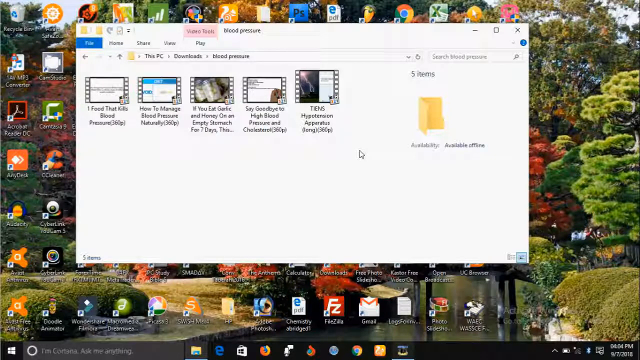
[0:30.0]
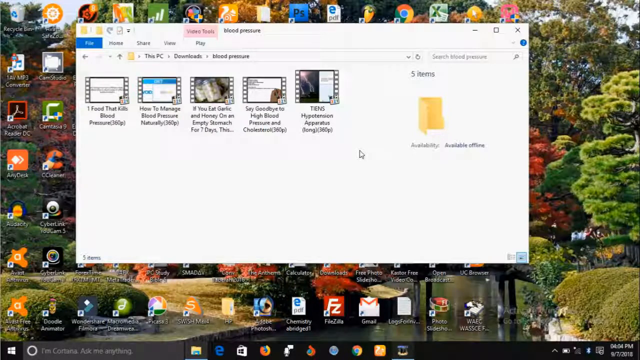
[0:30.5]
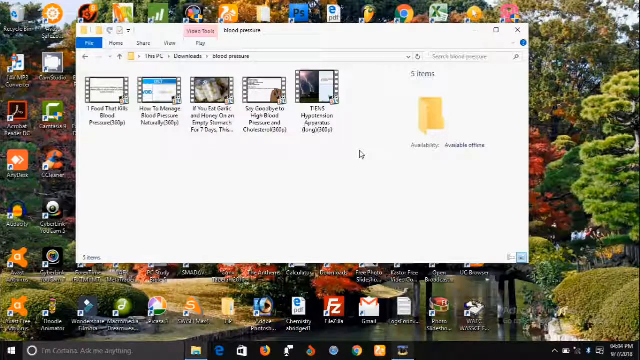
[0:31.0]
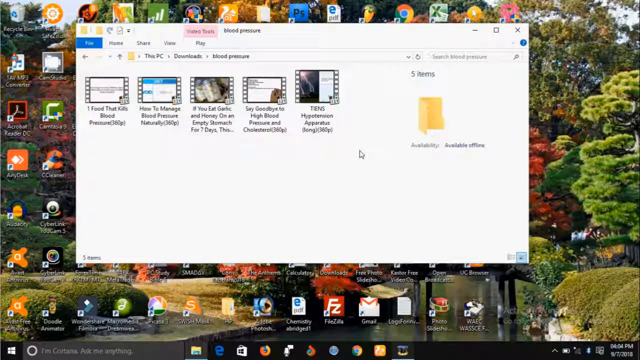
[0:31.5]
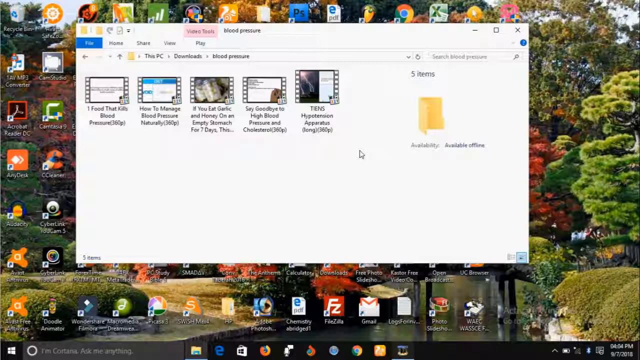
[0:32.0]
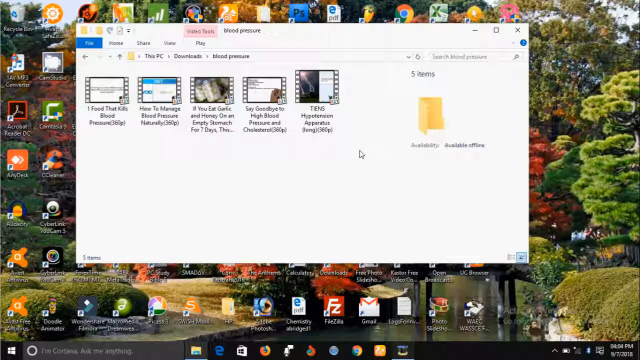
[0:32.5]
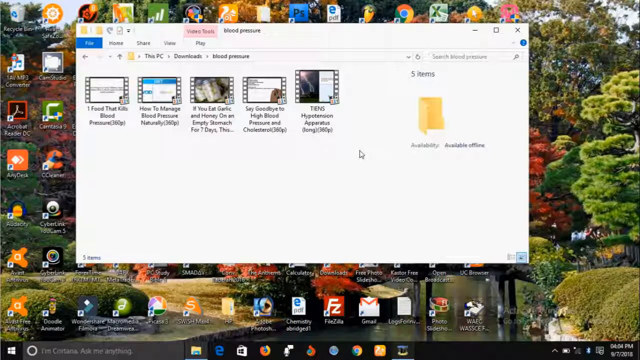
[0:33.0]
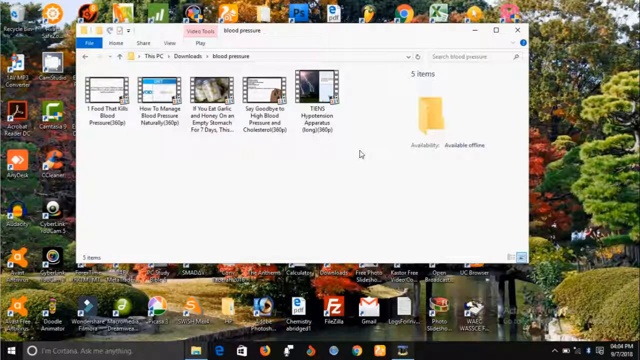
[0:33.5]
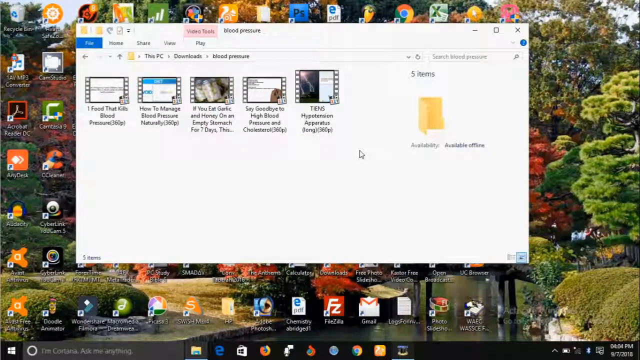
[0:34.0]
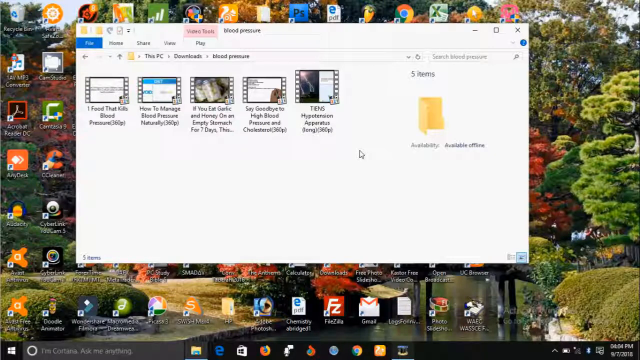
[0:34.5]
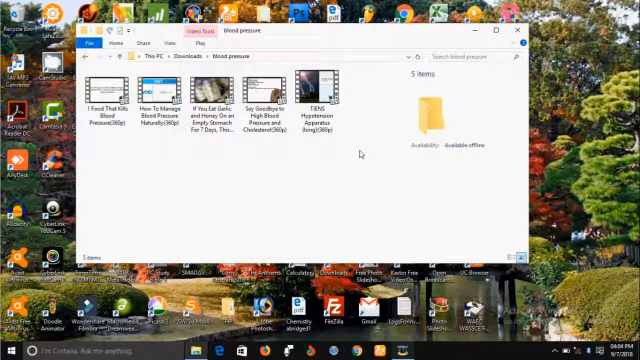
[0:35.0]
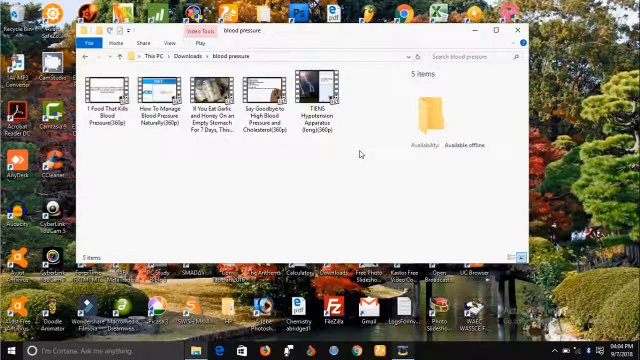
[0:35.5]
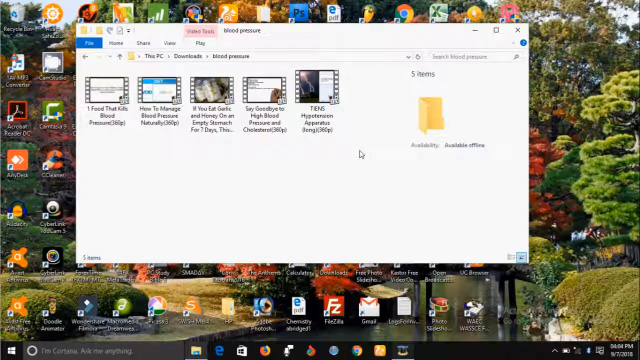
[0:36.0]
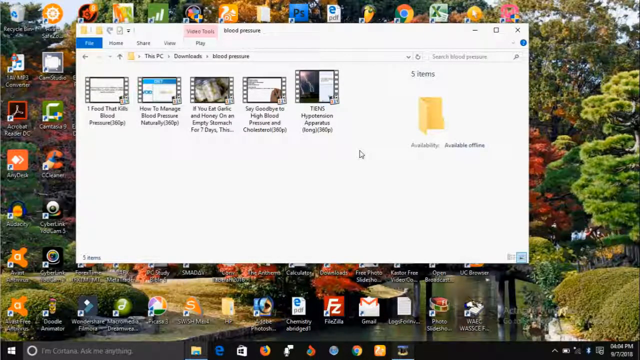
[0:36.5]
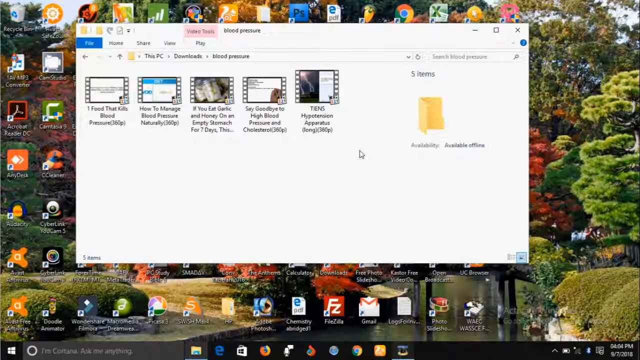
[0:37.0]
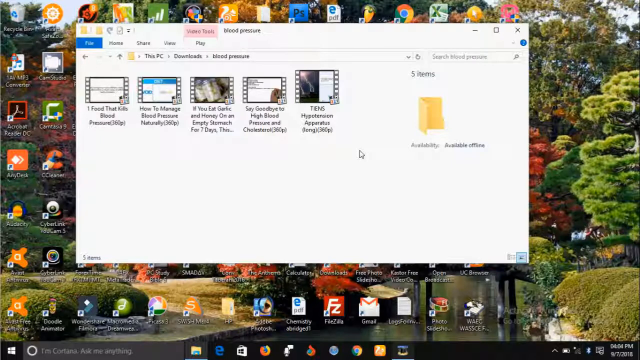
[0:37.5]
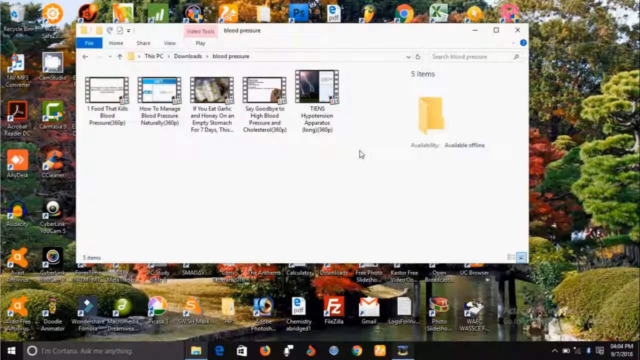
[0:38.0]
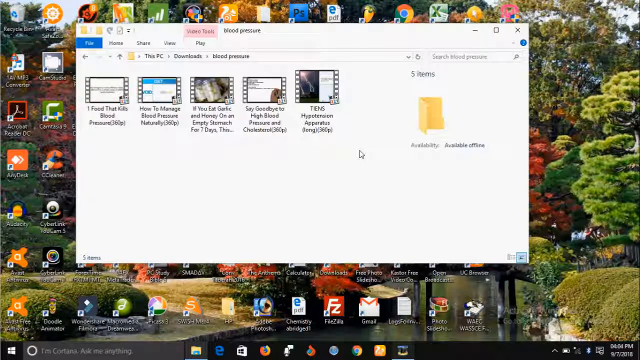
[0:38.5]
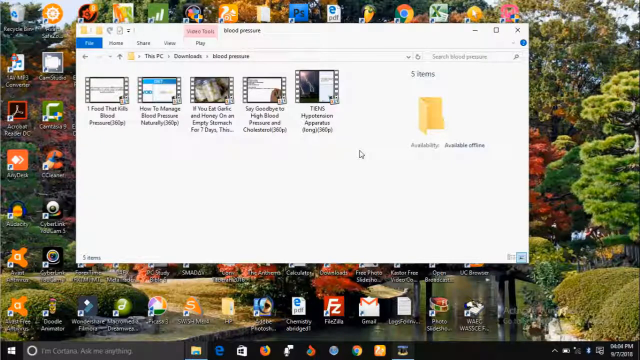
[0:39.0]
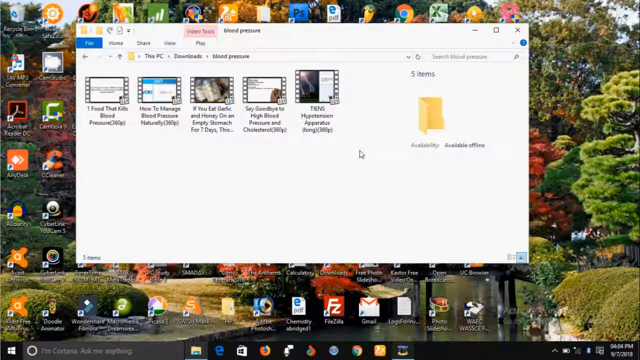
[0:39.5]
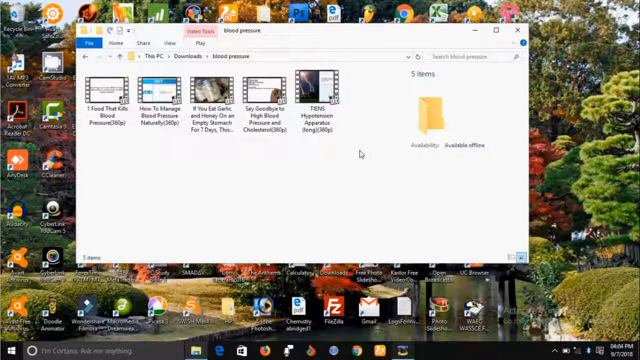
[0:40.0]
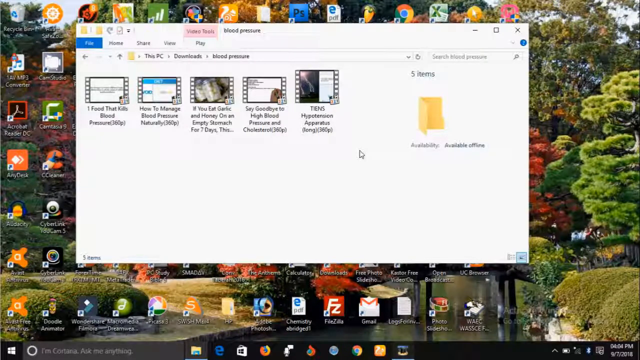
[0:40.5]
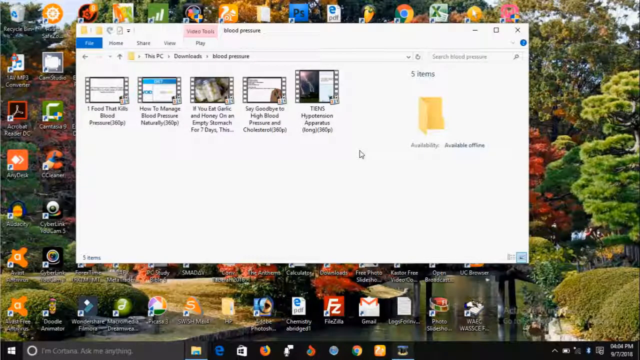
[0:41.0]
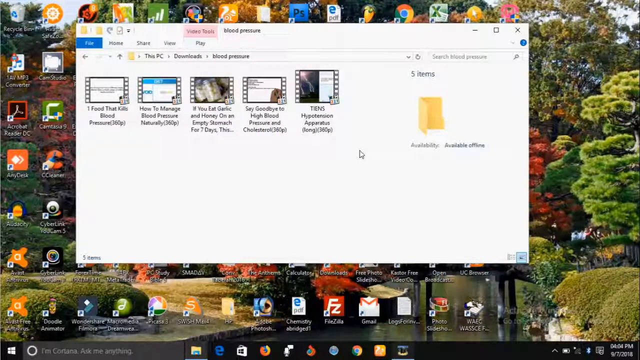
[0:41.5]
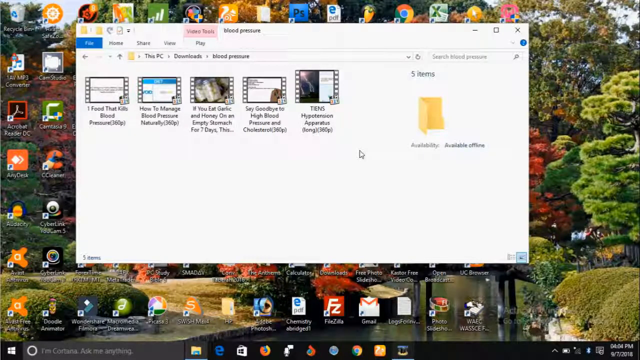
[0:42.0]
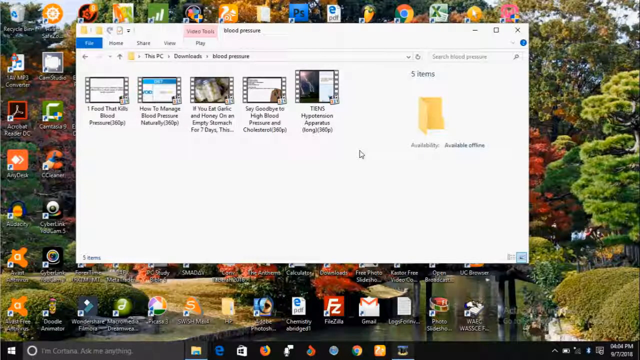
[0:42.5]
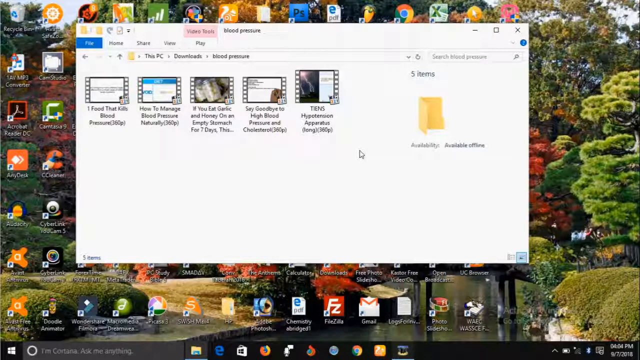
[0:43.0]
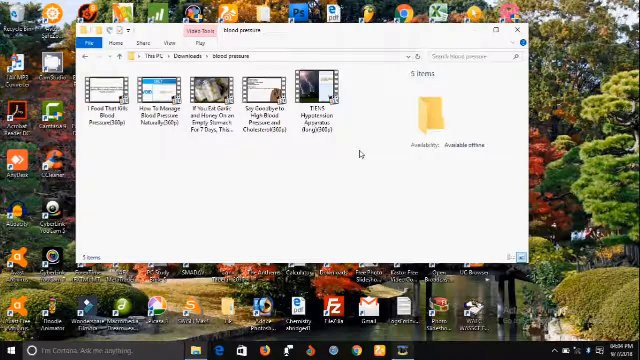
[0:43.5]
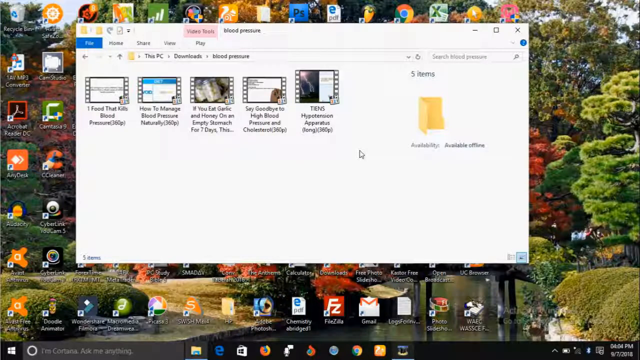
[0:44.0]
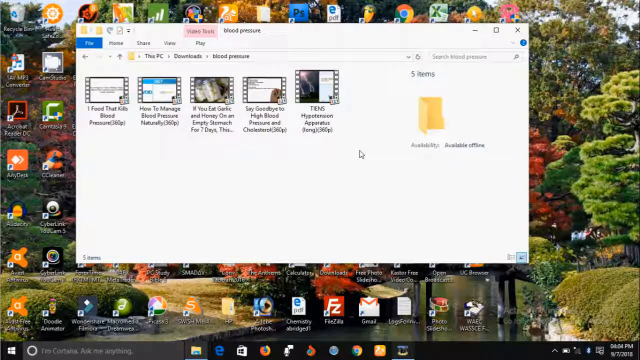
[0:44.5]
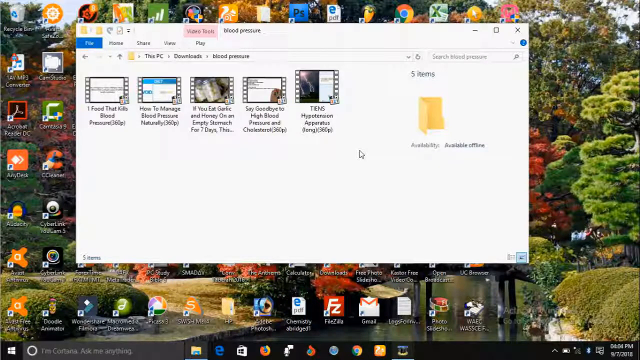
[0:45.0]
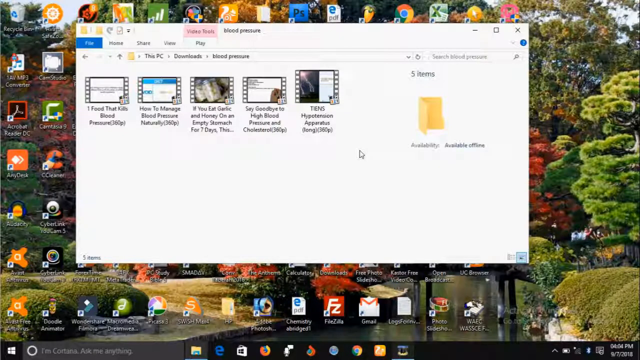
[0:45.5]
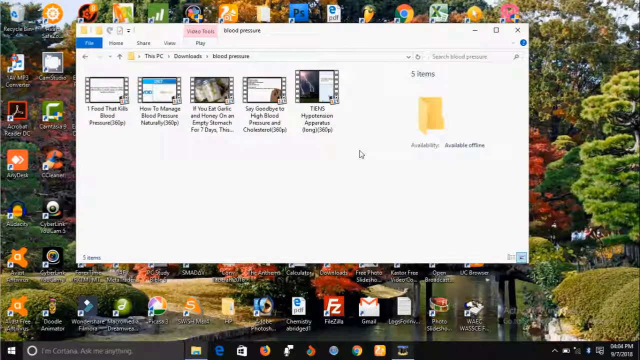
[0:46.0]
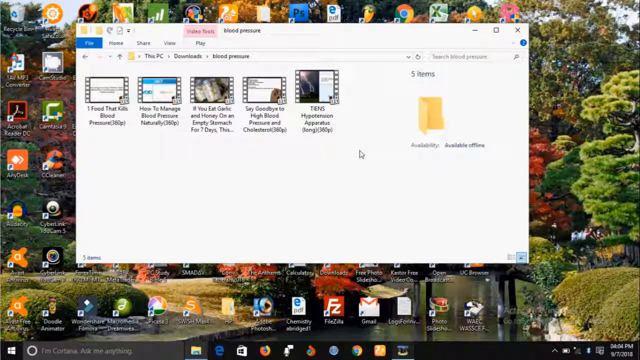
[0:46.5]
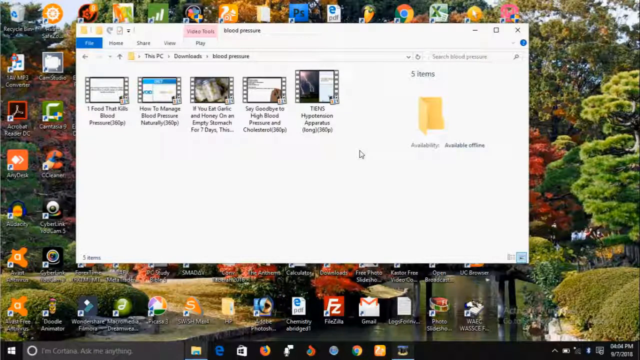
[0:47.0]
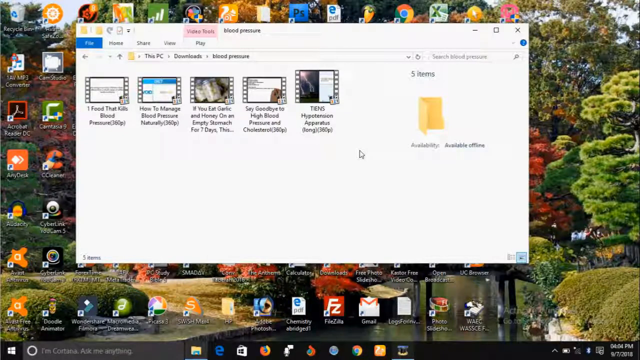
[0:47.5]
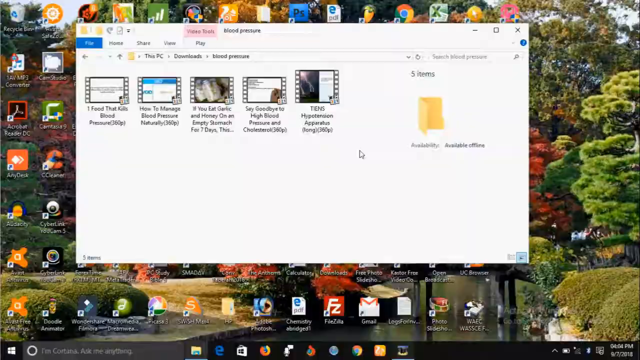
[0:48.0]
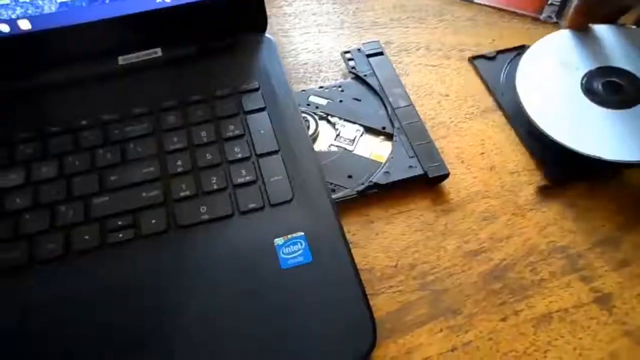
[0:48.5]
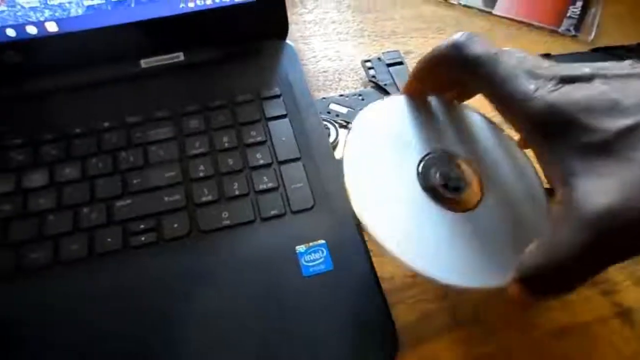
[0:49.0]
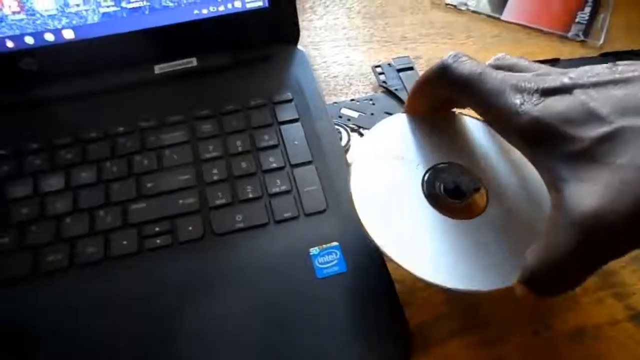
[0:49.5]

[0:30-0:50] Icons pinned to the taskbar include File Explorer, Microsoft Edge, Firefox, Chrome and UCL browser. A hand opens the CD tray on the right side of the laptop, and the tray opens. A CD disc carrier or container is on the right side of the laptop. The laptop is black and is on top of a brown wooden table. It is a Windows laptop, judging by the application layout and names. The desktop wallpaper is a field view of a lake, colourful flowers and trees, with the lake reflecting the flowers and a small wooden bridge slightly visible. The folder's file path is "this PC, Downloads, Blood Pressure", a folder of blood pressure videos.